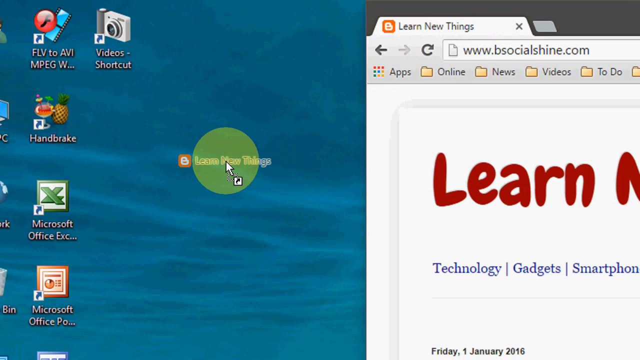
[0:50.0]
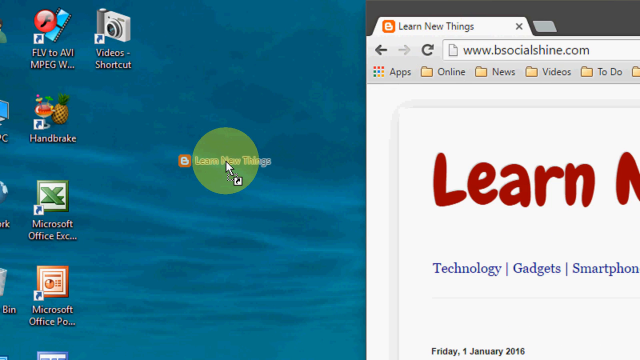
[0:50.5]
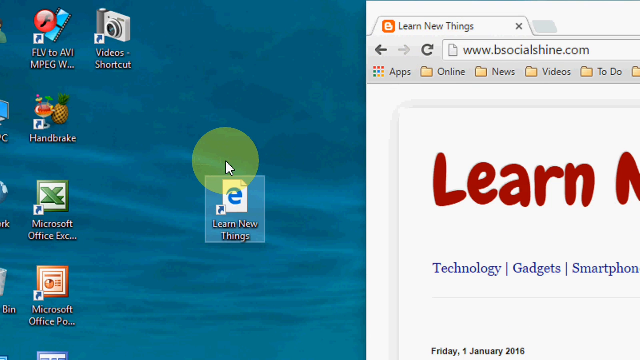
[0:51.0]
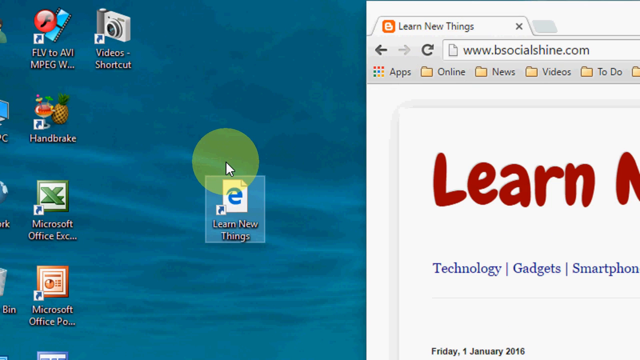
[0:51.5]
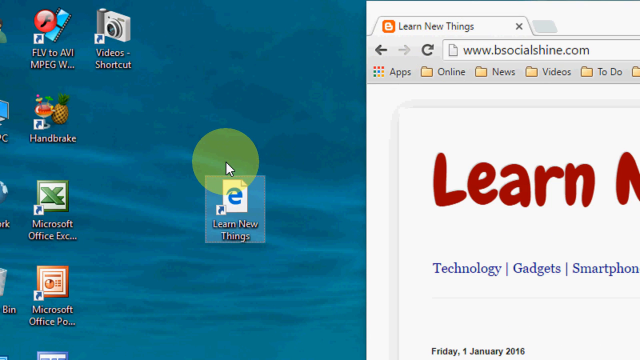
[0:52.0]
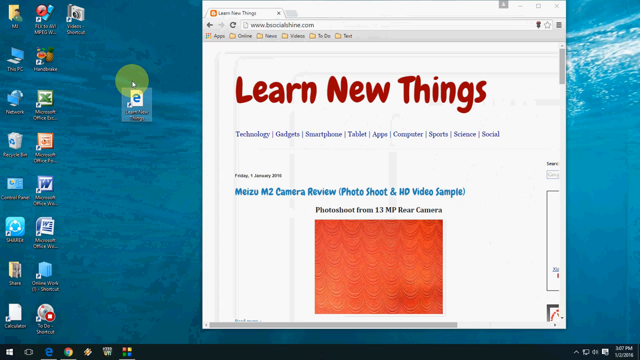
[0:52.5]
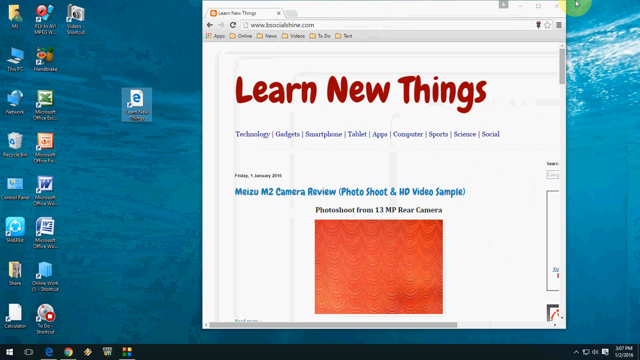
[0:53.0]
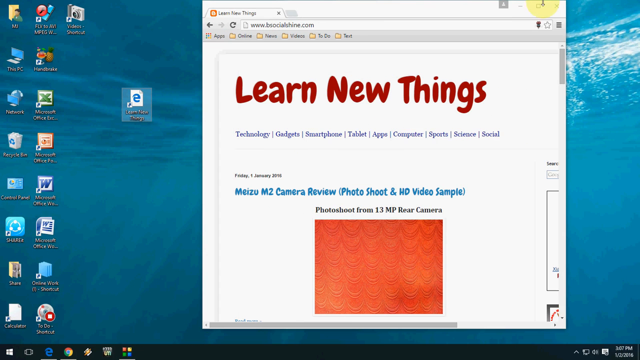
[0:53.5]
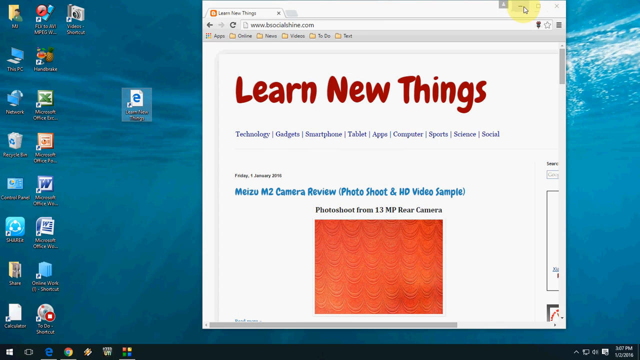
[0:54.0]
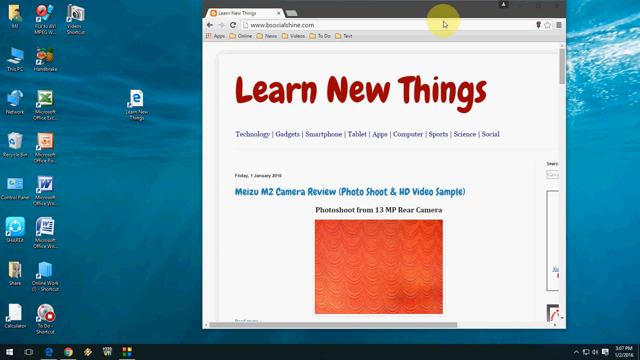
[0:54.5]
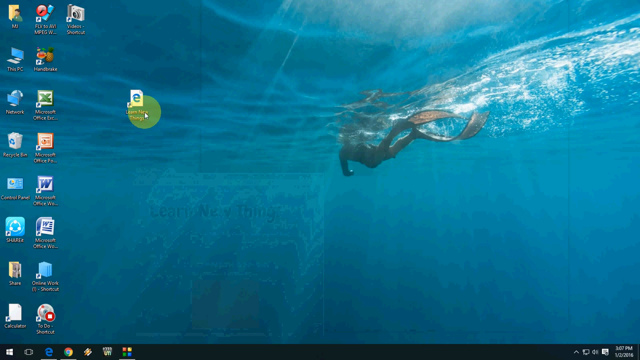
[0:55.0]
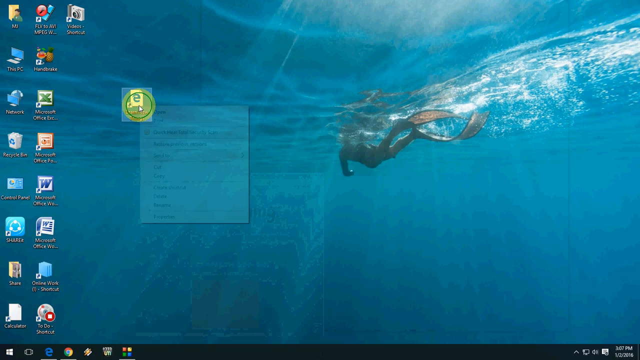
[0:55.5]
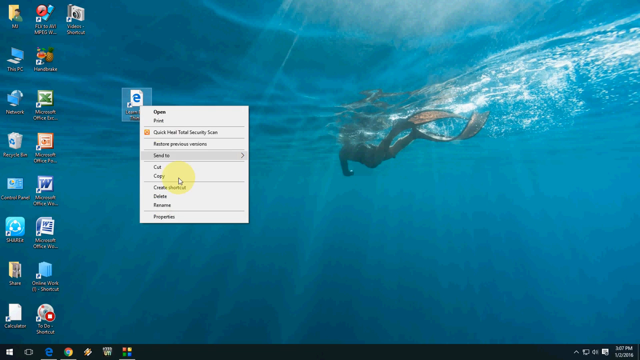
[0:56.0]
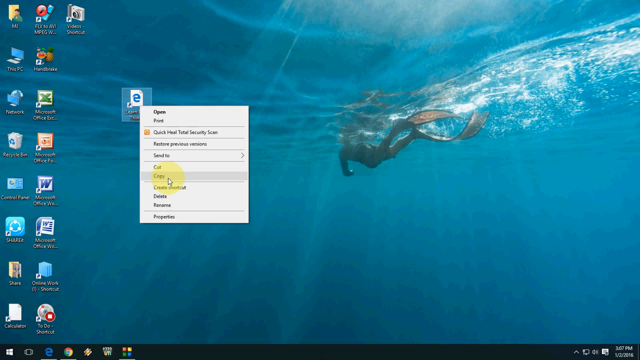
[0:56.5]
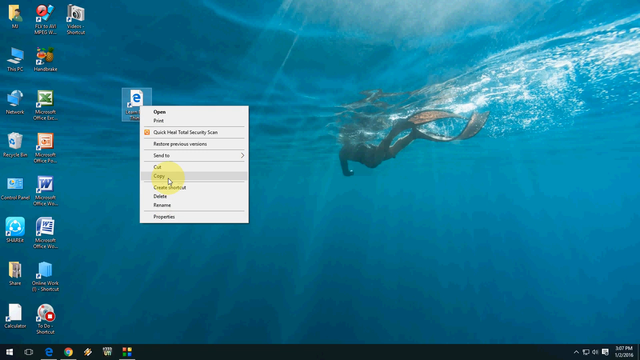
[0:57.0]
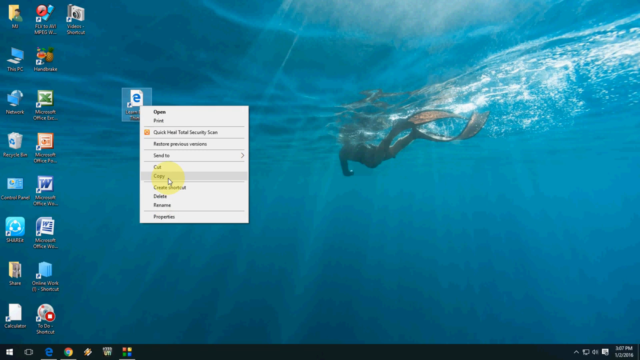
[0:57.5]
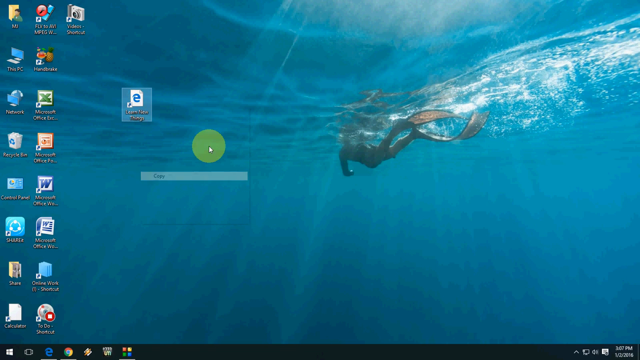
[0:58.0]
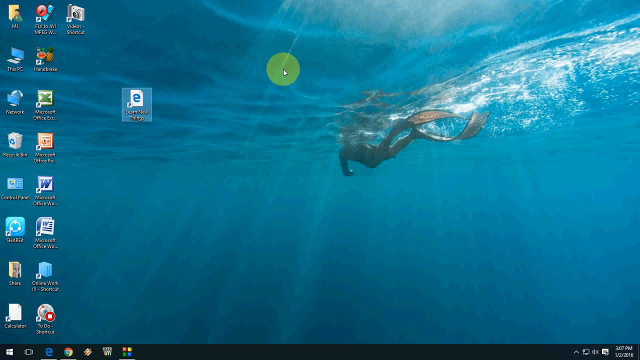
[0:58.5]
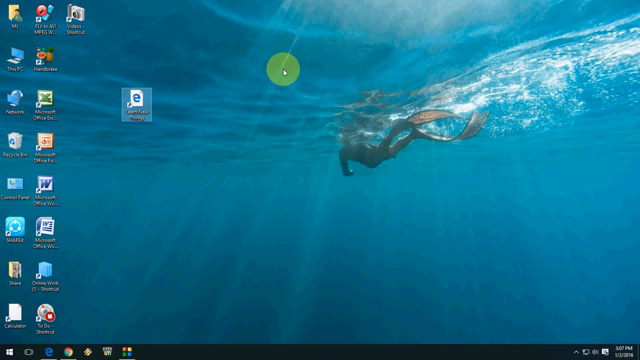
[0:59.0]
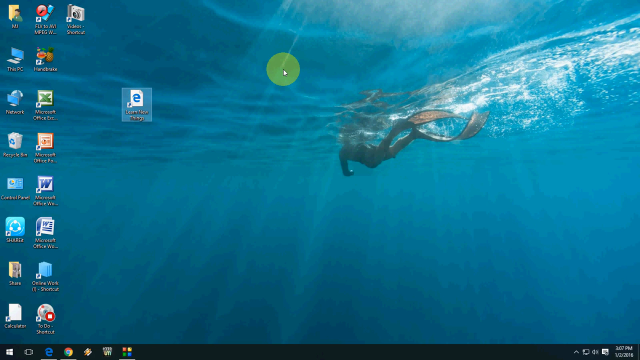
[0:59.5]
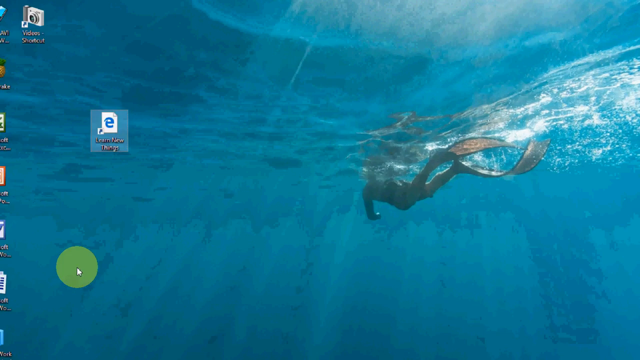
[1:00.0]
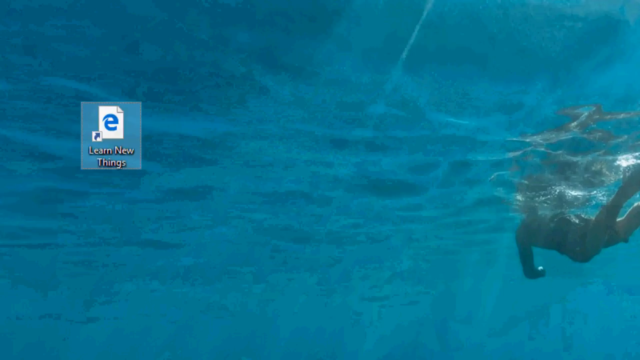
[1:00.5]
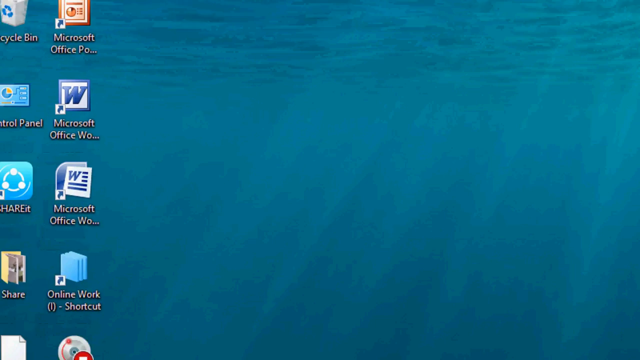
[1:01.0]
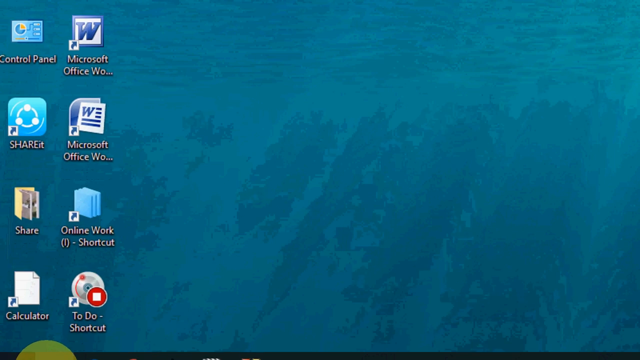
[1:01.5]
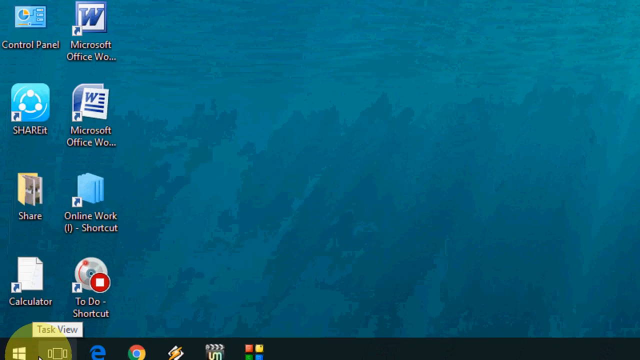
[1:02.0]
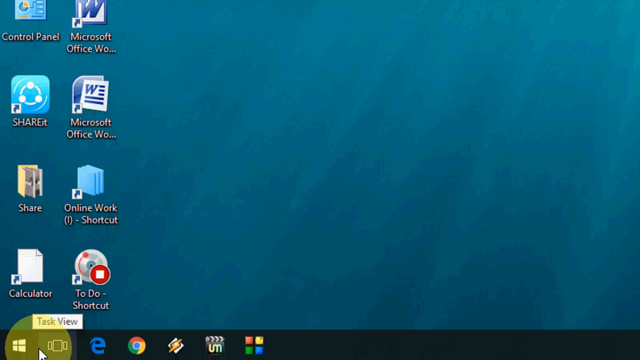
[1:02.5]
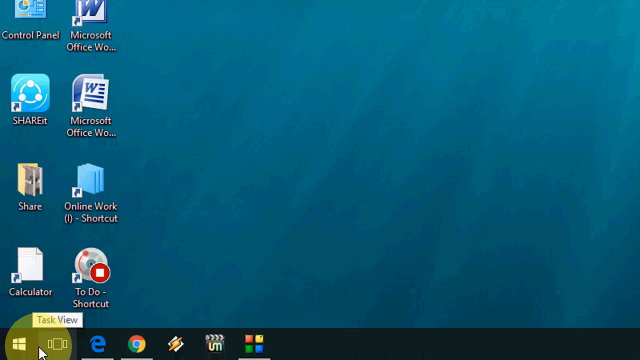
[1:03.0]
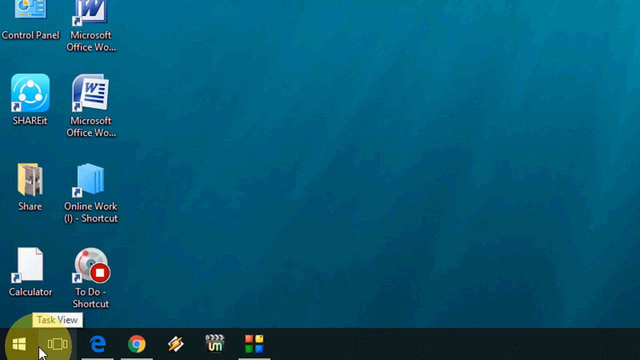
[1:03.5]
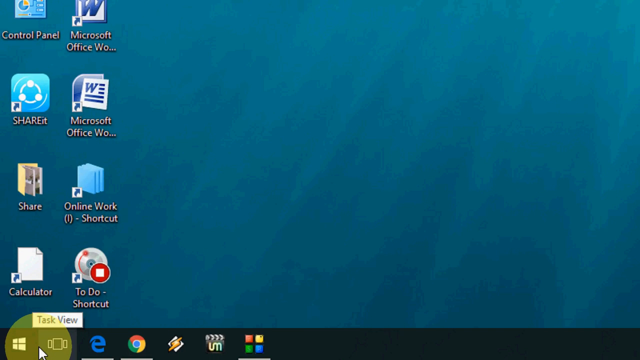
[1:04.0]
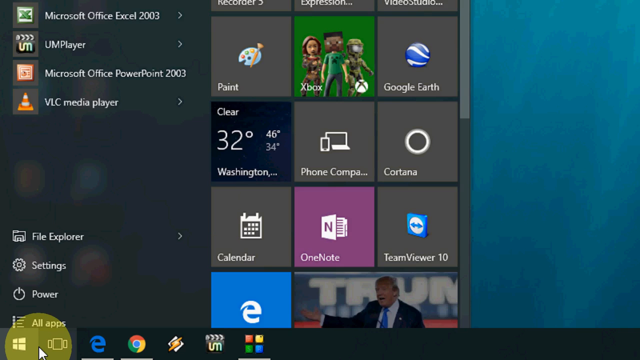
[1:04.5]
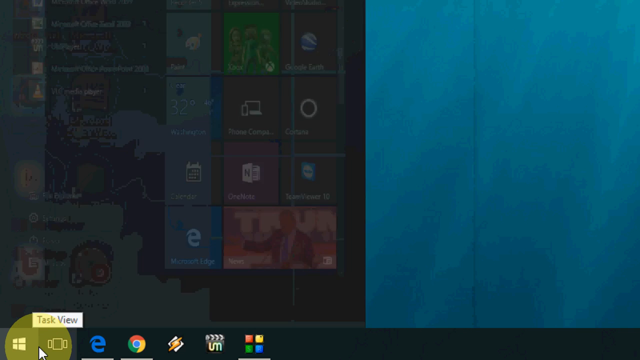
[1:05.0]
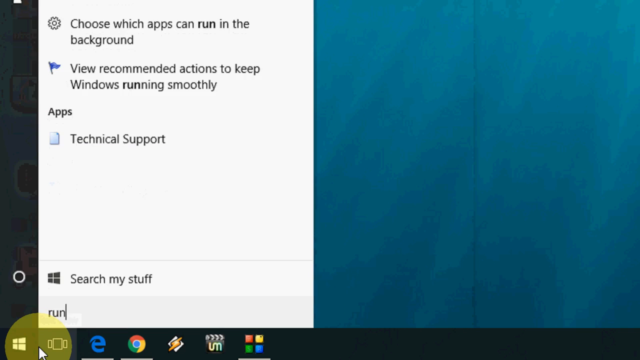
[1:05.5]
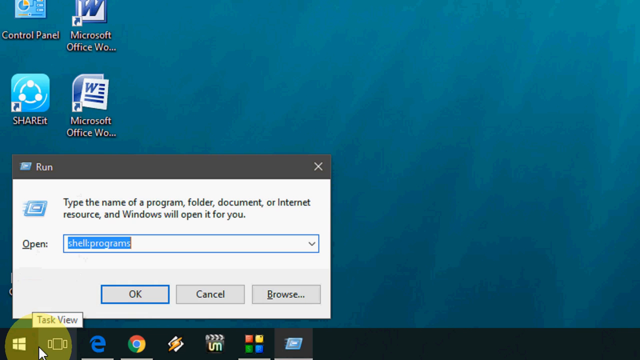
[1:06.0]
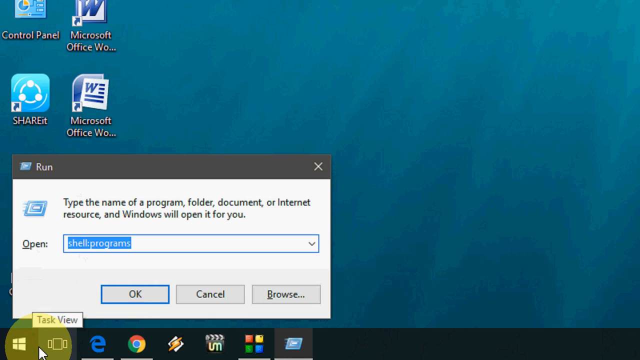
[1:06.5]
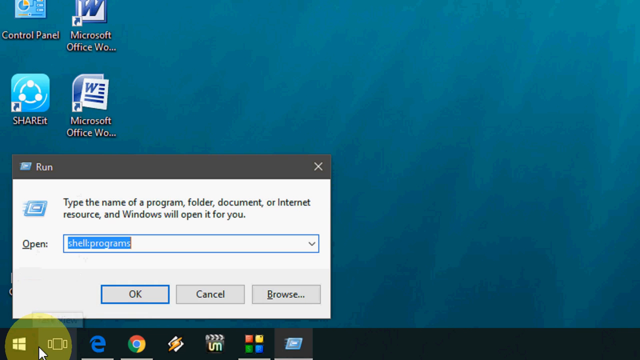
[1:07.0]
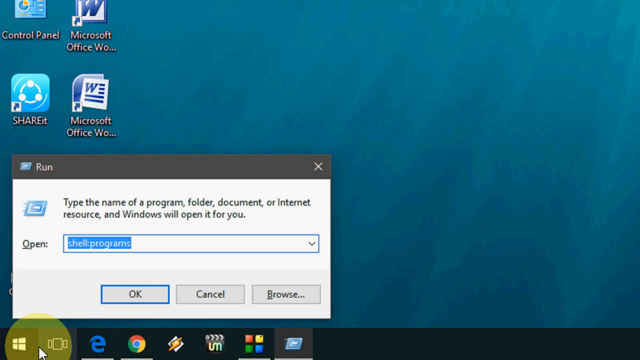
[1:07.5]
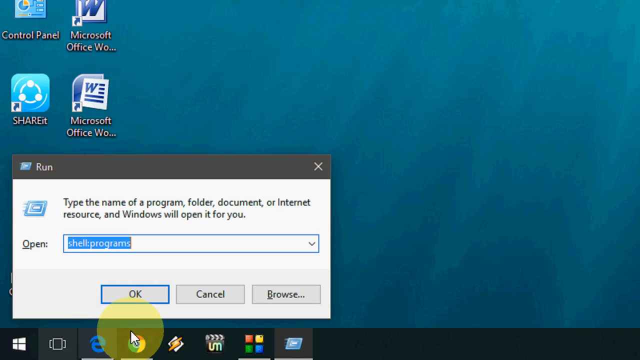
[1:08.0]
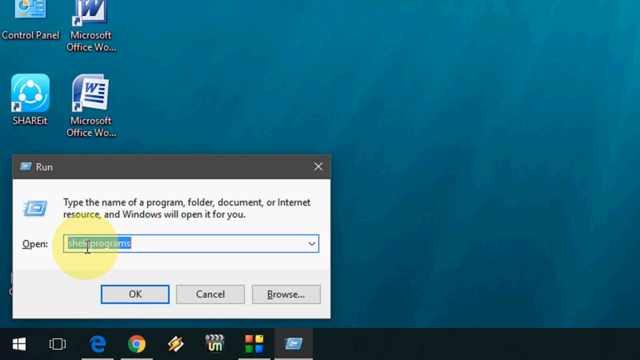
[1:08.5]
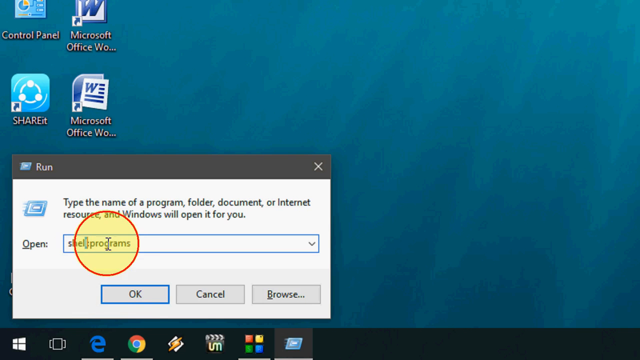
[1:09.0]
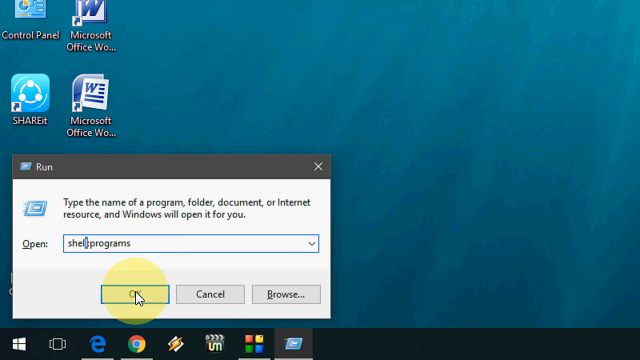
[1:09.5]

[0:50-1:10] The website TheSocialShine.com is on the right side of the screen, with the browser taking up half of the desktop. The paper icon beside the www in the URL bar is dragged to the left and placed on the desktop, creating a new Internet Explorer shortcut titled "Learn New Things", the title of the web page open in the browser. The user right-clicks the shortcut icon on the desktop and clicks Copy. The user then opens the Microsoft Windows menu, goes into the Run desktop app, types "shell:programs" and clicks OK. The "Learn New Things" icon is then shown on the desktop with the browser still open on the right-hand side of the screen, still on the Learn New Things web page, but the icon looks different now.